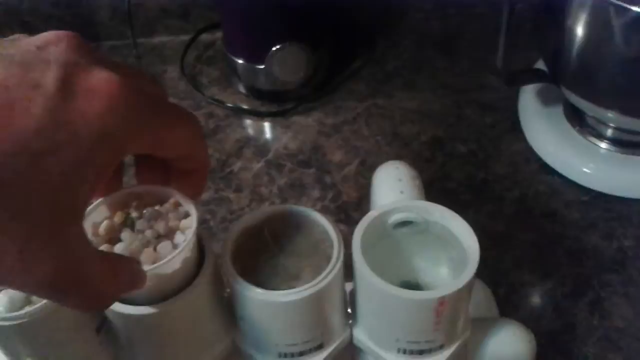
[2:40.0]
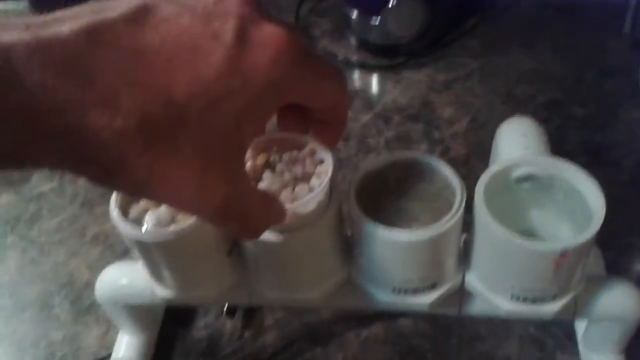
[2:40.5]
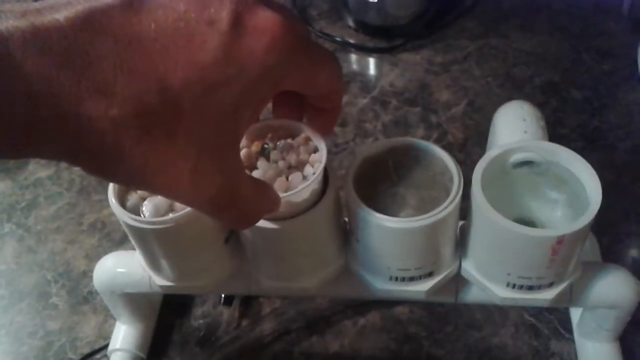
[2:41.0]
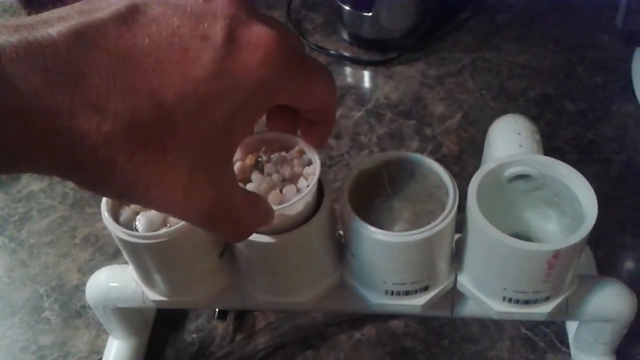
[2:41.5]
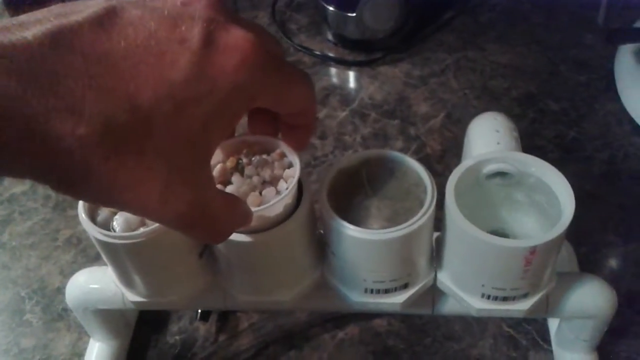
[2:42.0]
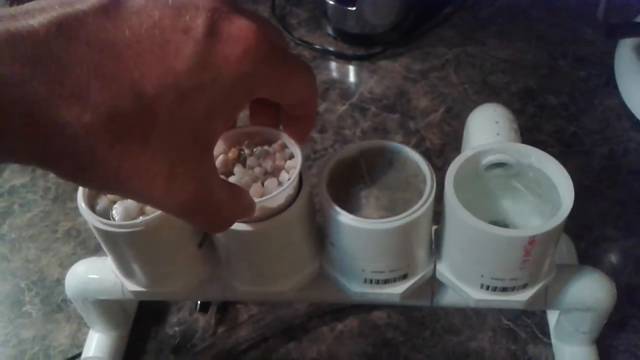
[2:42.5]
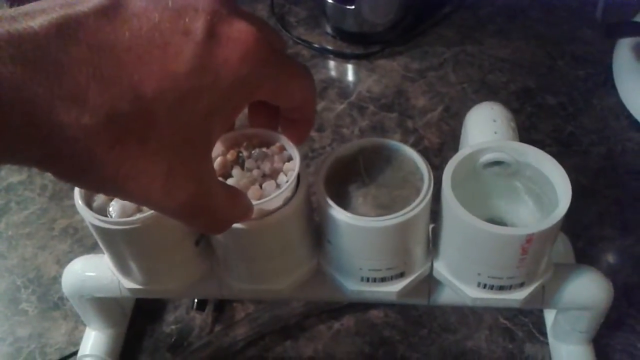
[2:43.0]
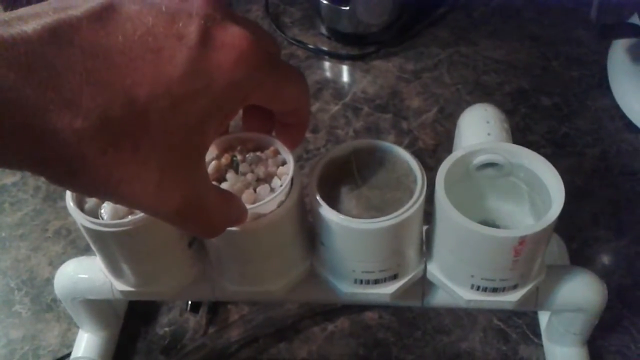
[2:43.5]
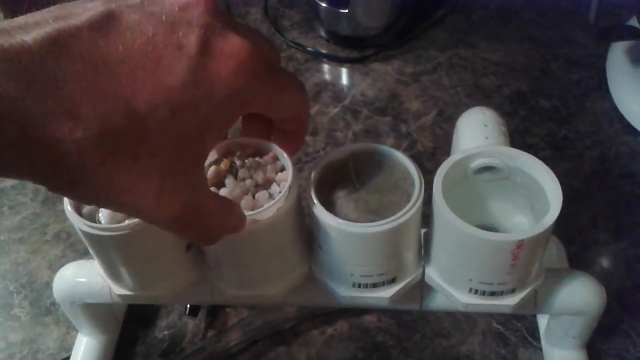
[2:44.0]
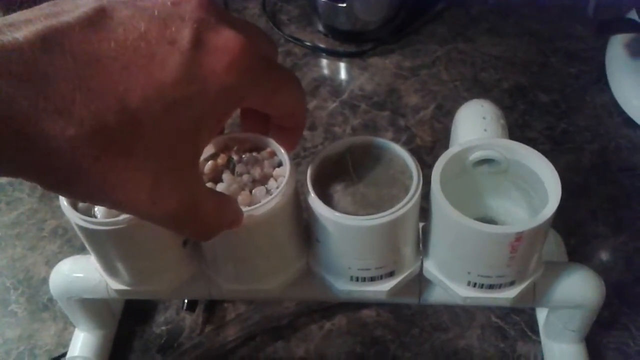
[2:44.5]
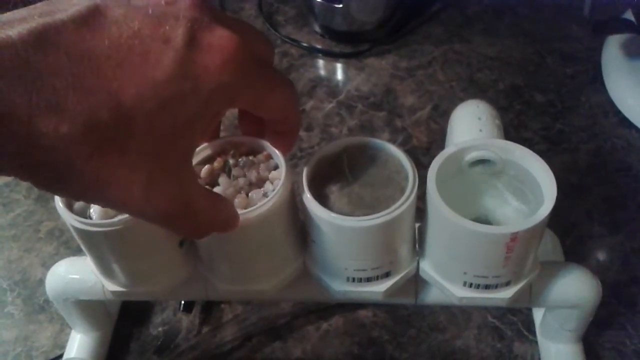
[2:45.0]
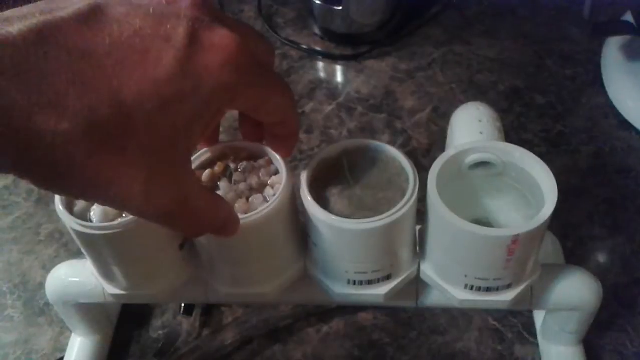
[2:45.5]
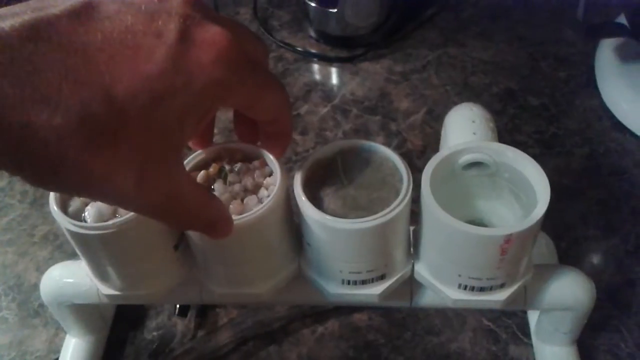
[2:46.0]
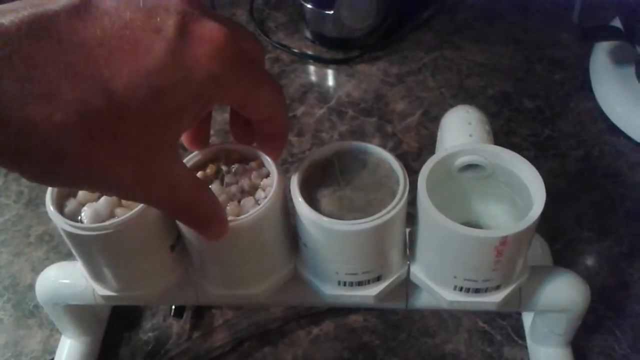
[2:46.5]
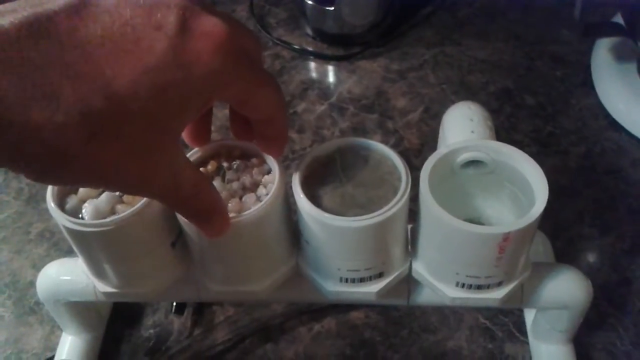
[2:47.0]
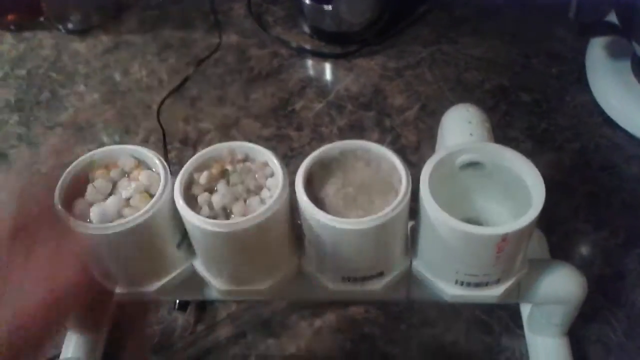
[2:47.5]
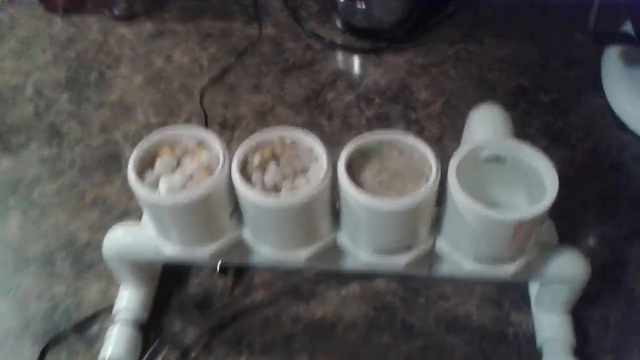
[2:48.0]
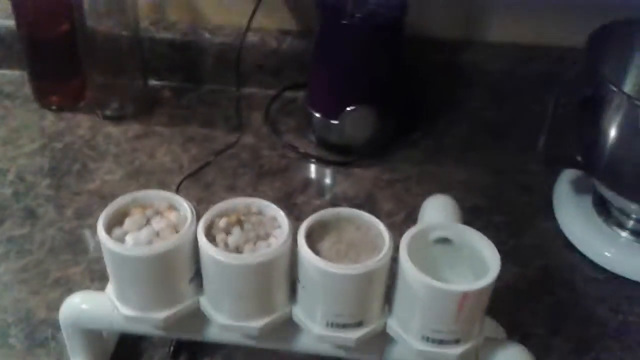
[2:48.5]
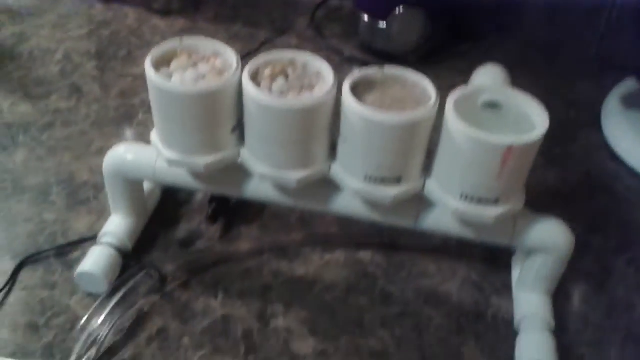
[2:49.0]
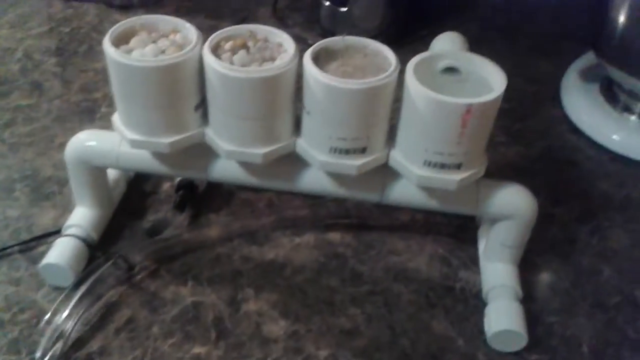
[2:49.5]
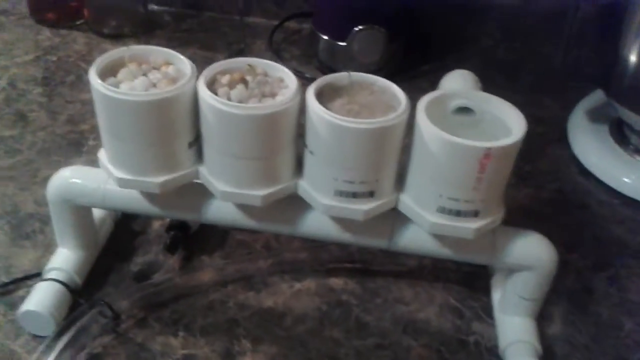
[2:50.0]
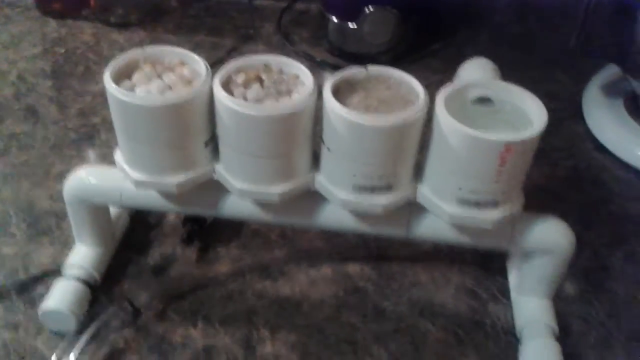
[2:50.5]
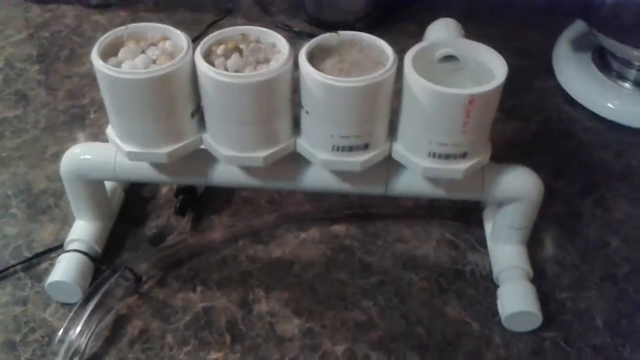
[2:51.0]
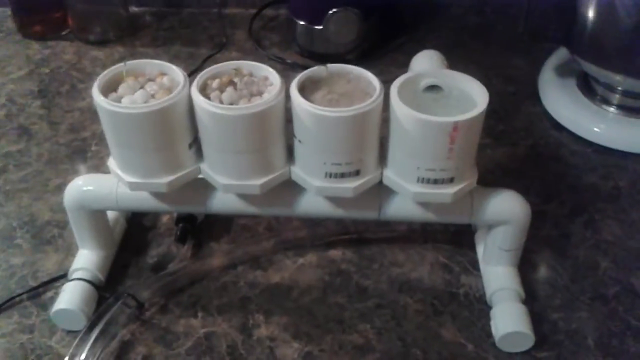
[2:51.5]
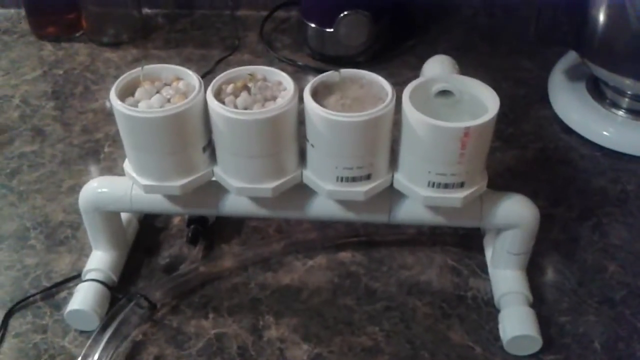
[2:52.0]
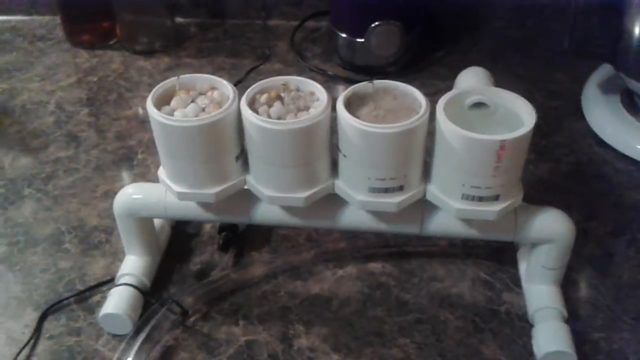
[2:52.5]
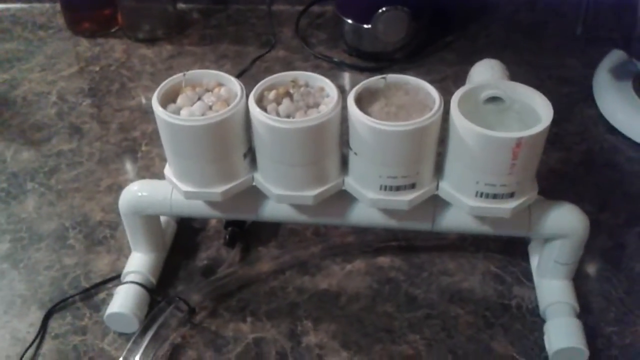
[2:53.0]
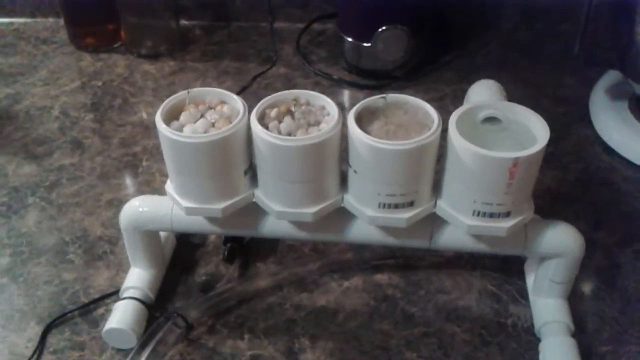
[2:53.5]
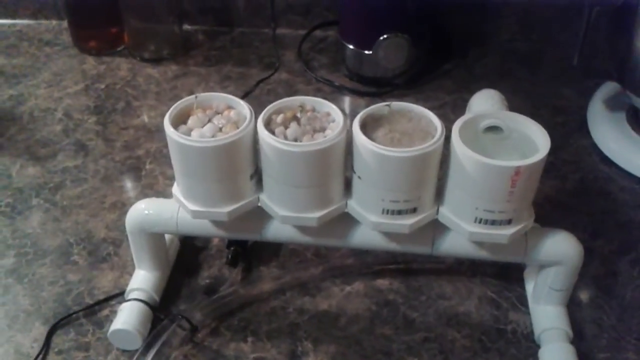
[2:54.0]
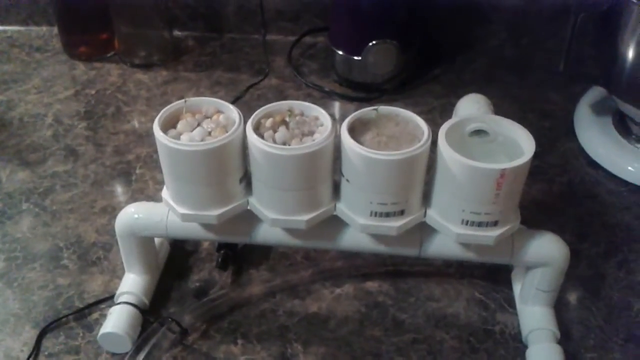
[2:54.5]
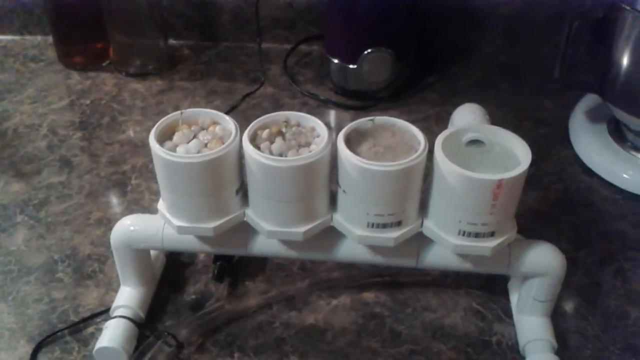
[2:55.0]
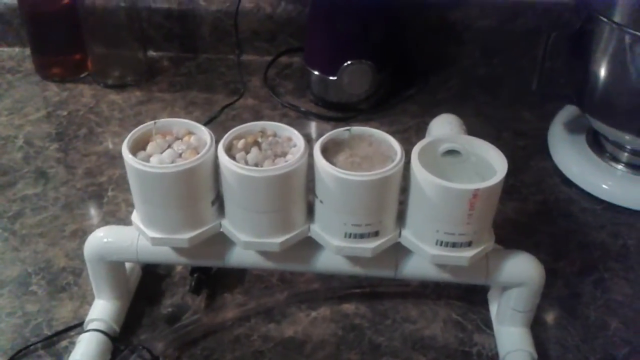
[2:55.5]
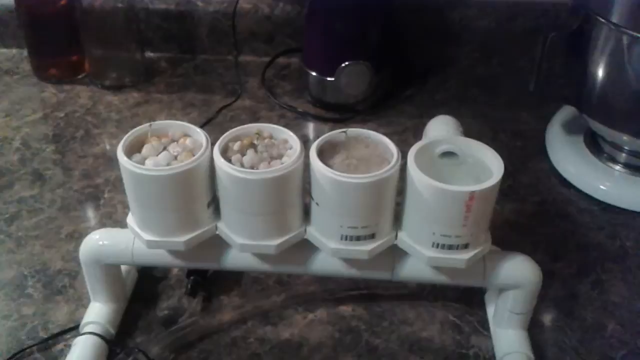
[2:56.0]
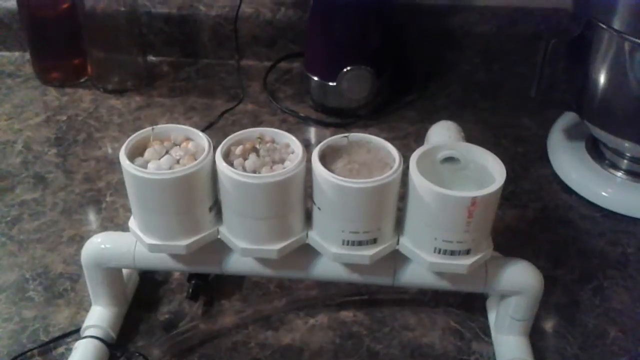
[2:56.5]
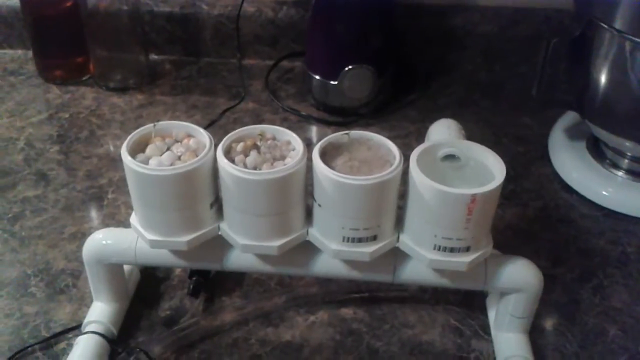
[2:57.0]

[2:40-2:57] A guy shows a contraption, apparently for hydroponic gardening, with four cylinders. Three hold cups of different materials inside, and each has the same thing growing out of it: one very small stem, kind of like an alfalfa sprout. One holds rocks, one smaller gravel, and one sand. Water drains into the fourth cylinder and goes through a tube into a bucket on the kitchen floor. There is a pump of some type.